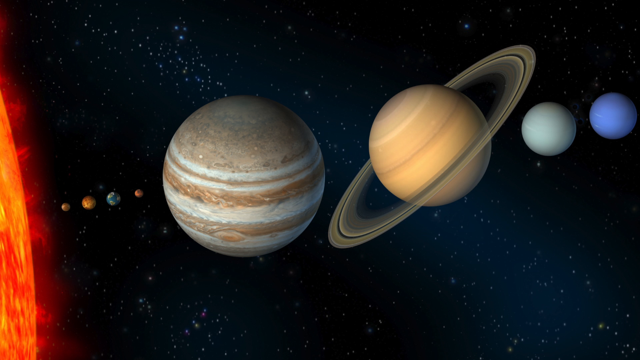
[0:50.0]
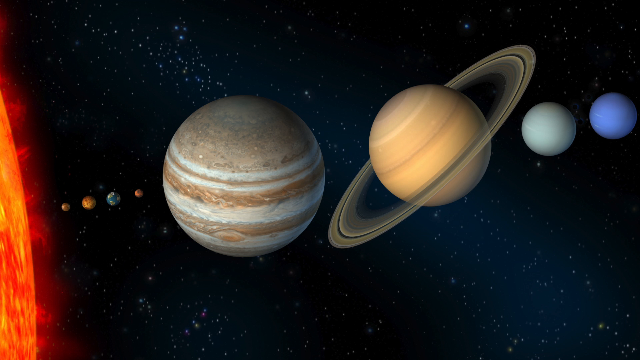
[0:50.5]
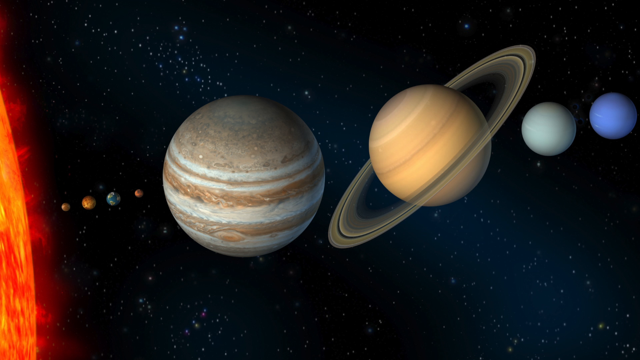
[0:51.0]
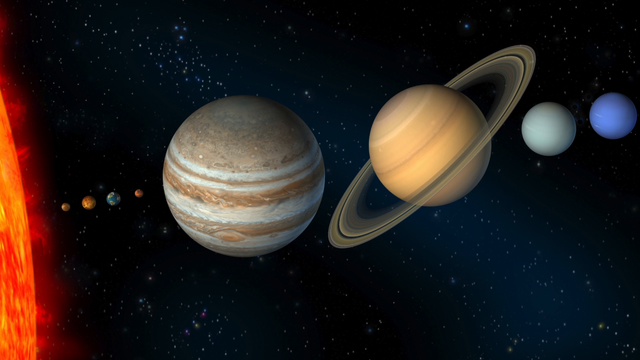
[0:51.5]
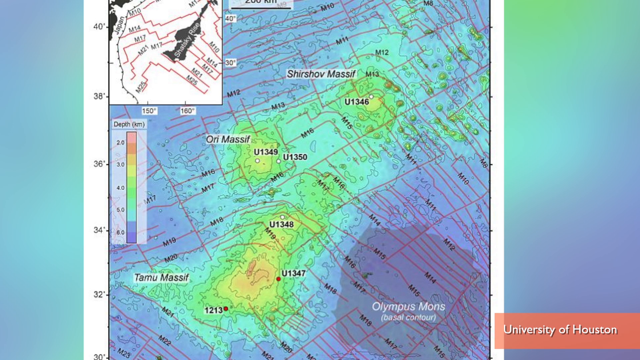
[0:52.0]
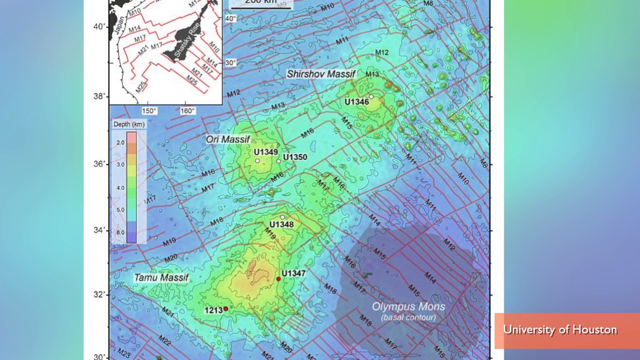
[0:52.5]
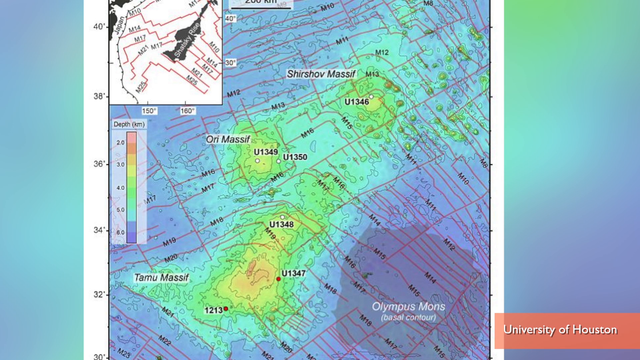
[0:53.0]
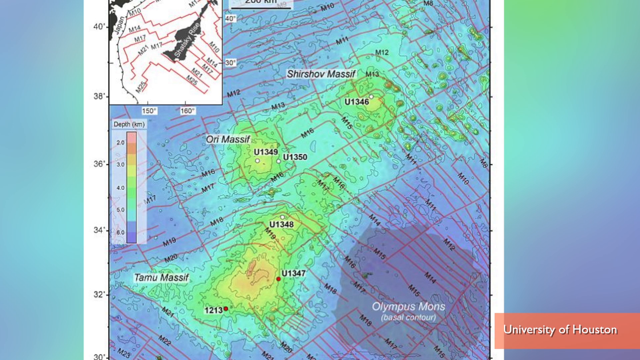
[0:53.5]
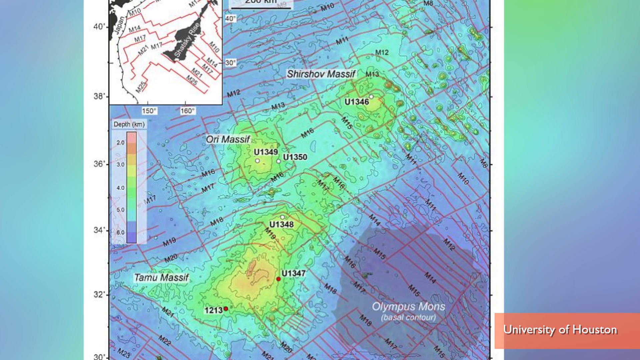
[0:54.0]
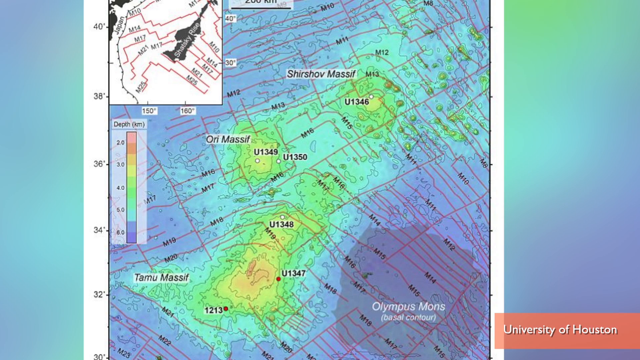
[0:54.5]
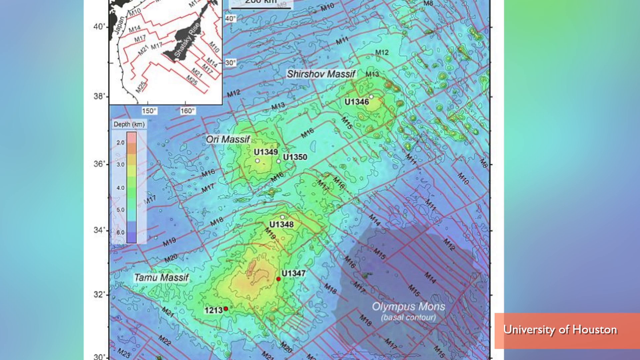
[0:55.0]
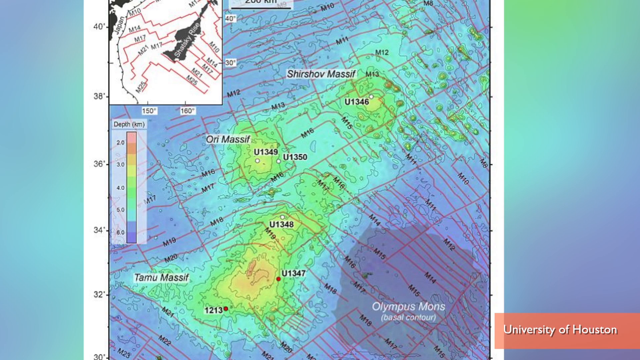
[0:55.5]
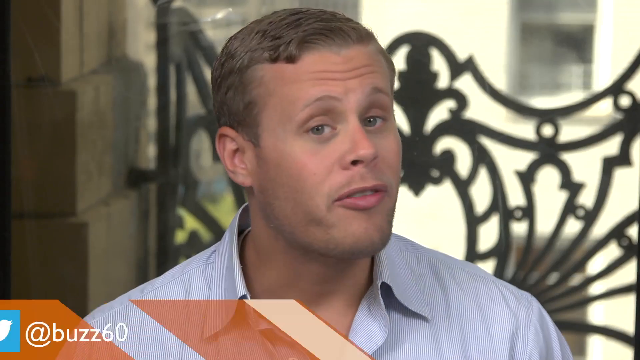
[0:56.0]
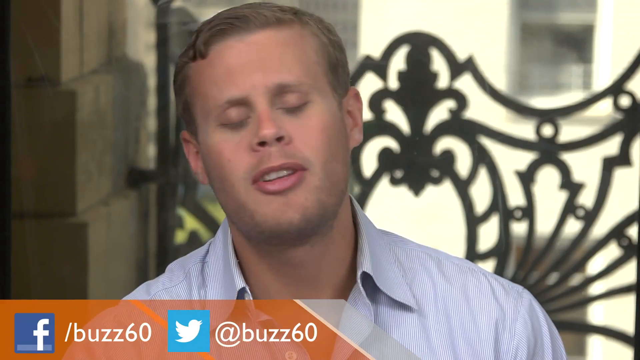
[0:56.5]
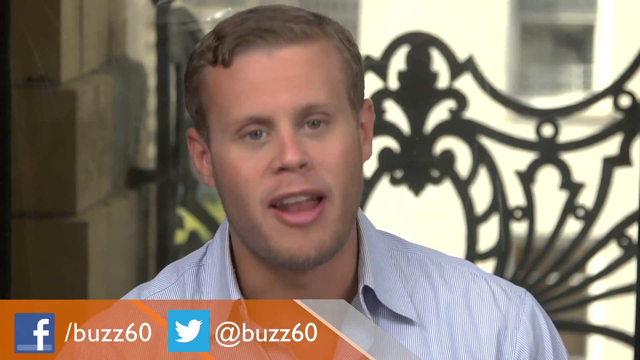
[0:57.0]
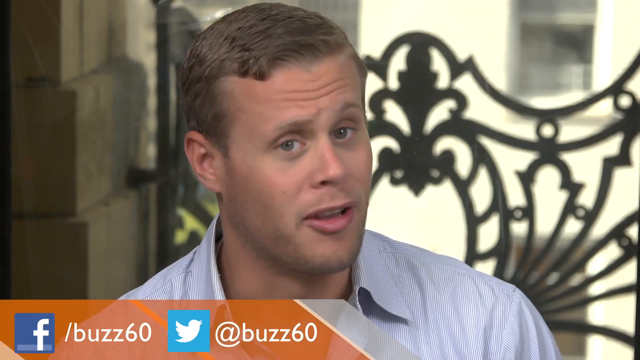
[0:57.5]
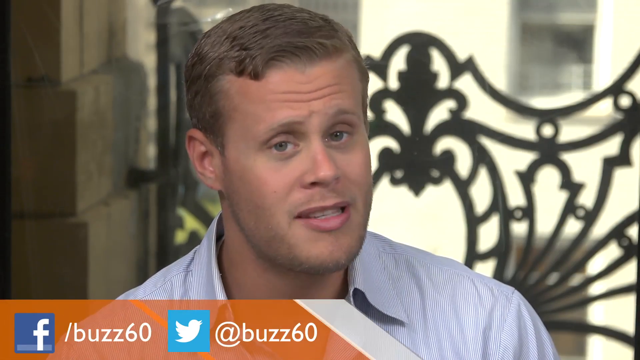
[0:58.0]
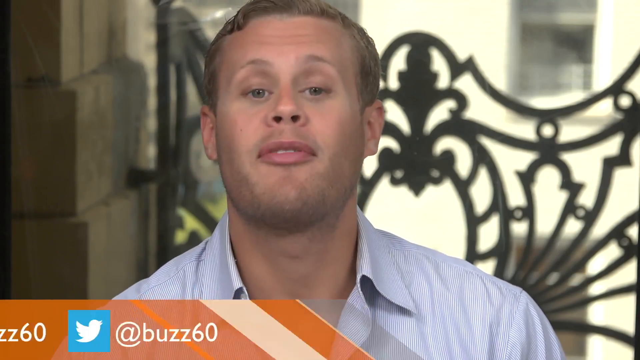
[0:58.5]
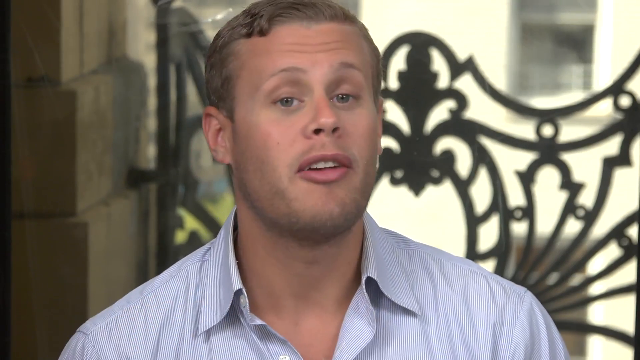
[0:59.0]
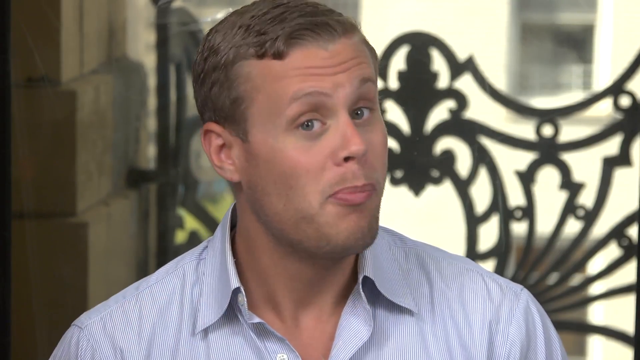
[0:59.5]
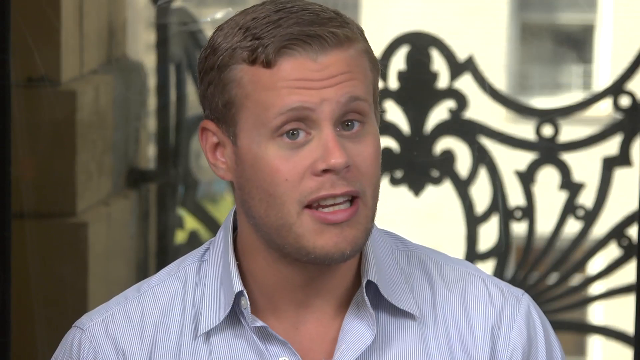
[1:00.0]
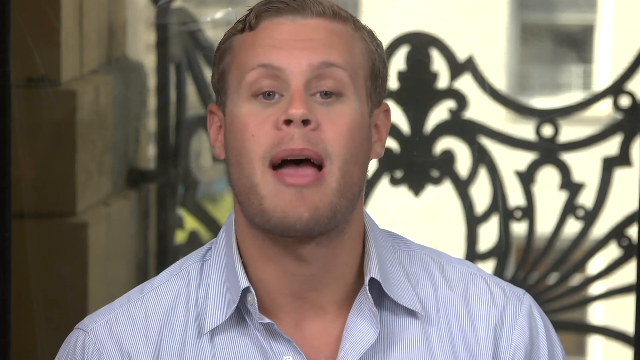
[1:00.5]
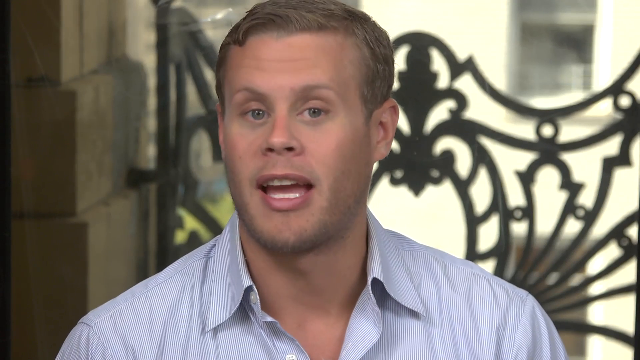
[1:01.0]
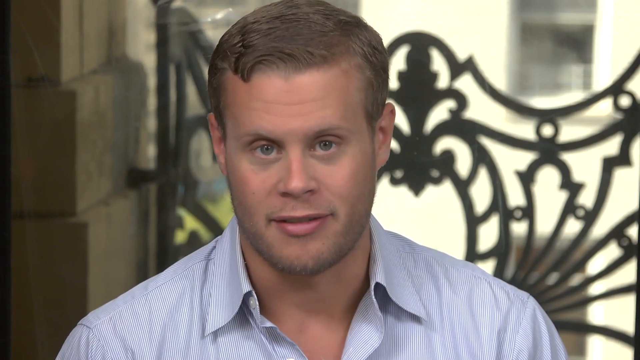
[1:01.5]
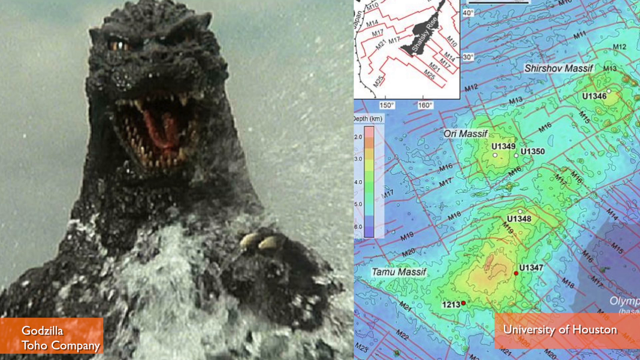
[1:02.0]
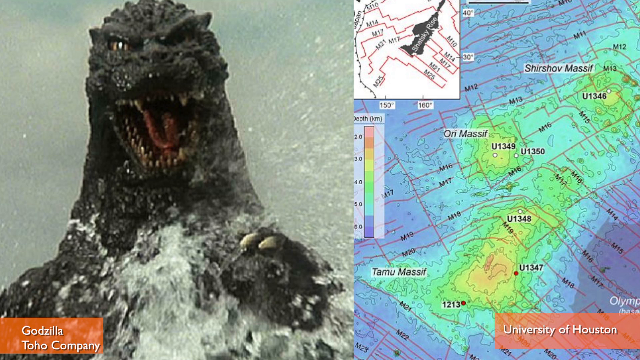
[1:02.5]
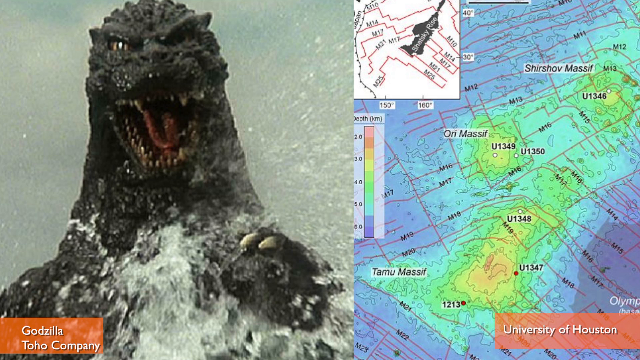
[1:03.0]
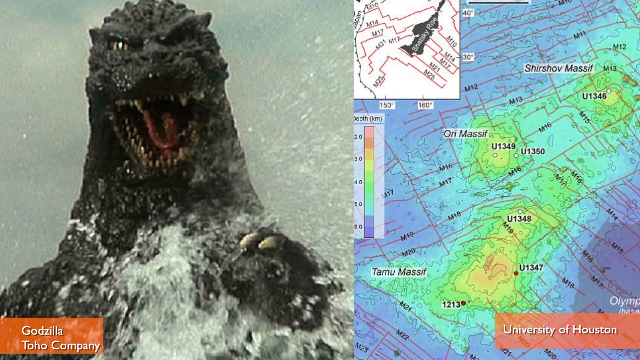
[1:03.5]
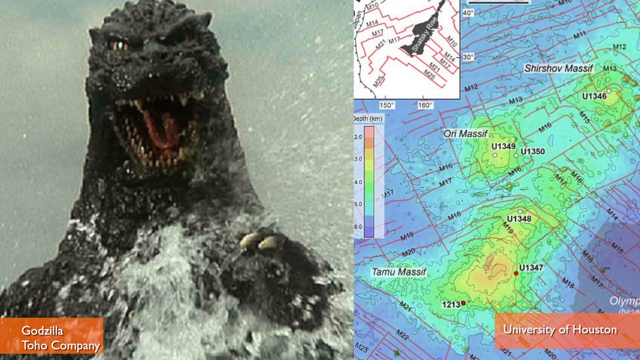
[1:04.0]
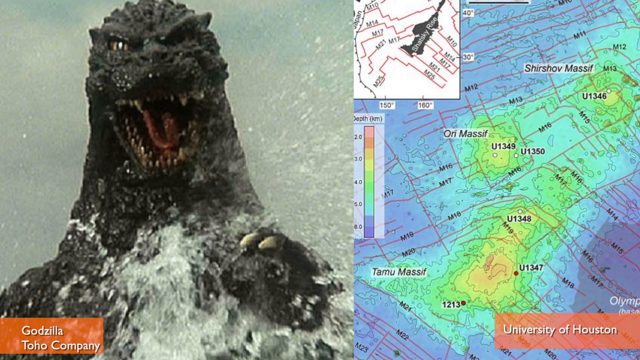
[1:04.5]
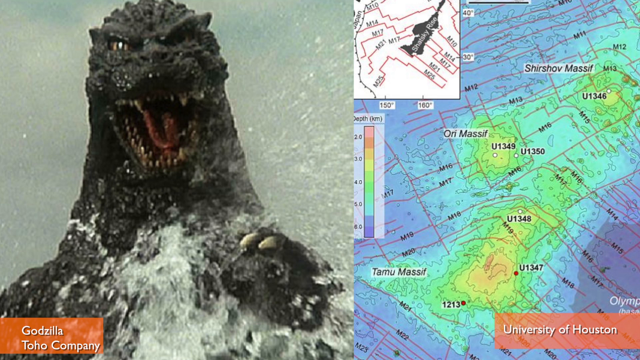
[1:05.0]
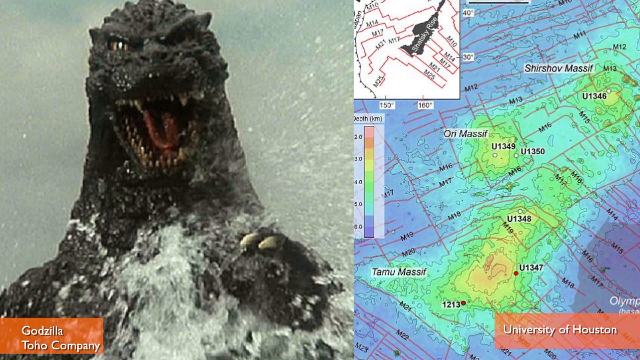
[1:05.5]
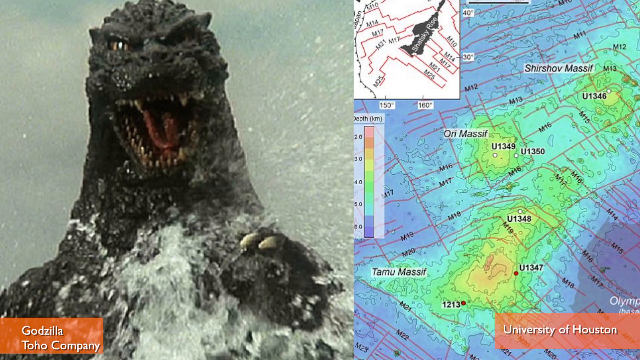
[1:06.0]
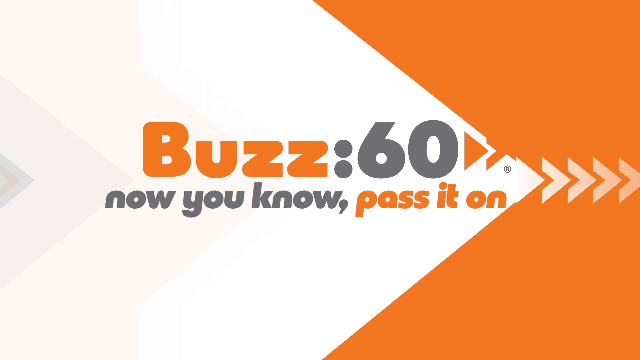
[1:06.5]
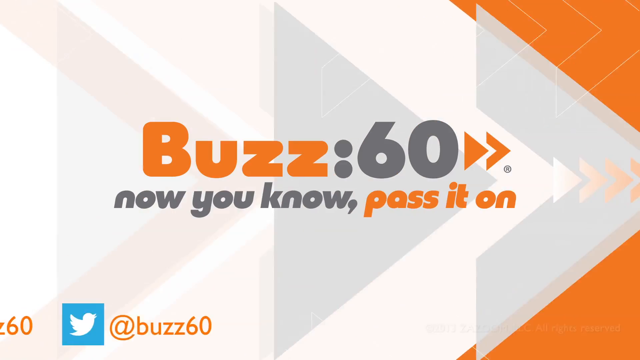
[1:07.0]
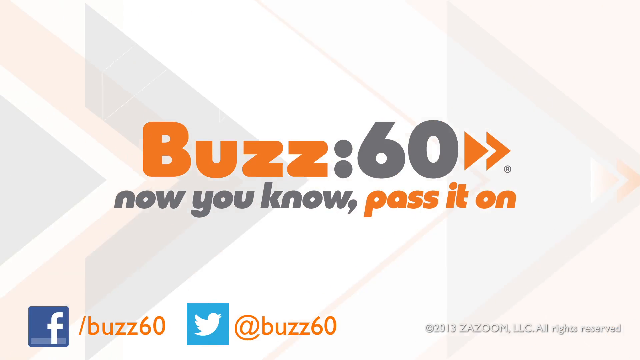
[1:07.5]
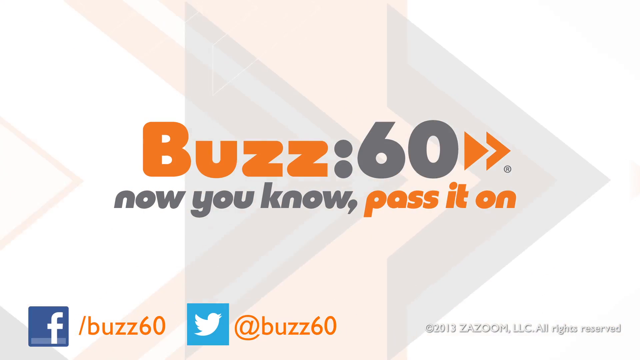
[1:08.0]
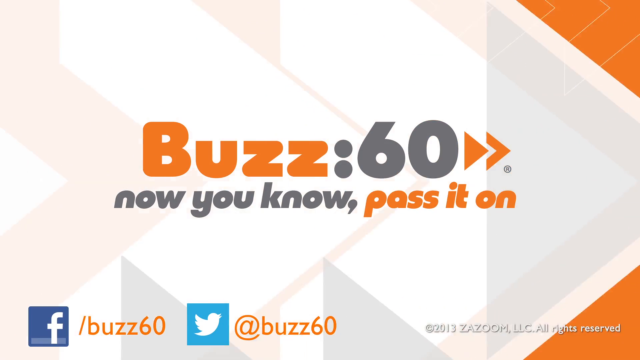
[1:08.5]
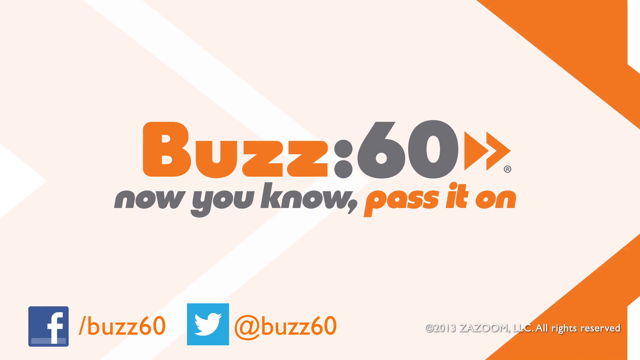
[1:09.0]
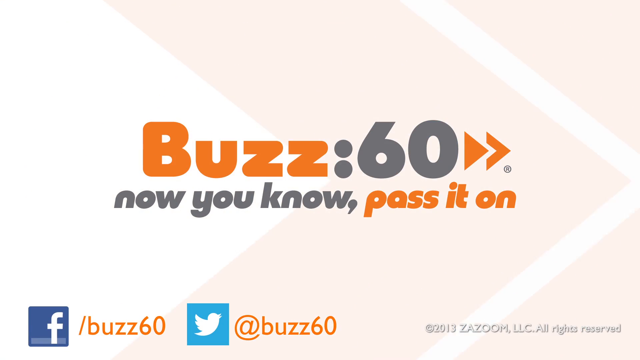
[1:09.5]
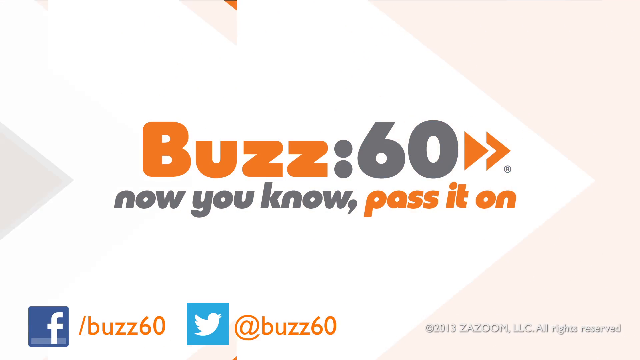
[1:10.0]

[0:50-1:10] The view returns from the solar system graphic to the 2D map, now panned out so that it looks like a piece of paper with the map on it, with a blurry blue and green background on the right and left sides. The map has different markings: a small white margin on the left counts from 32 to 34 up to 40 with small black notches, and almost like a small black and white plat map is inlaid in the upper left. The view then switches back to the man in front of the gate. Orange text briefly pops up at the bottom left with Facebook and Twitter information, and he continues talking. Next comes a split screen with Godzilla on the left and the 2D map on the right. Godzilla, who looks like he is coming out of the water, is black with his mouth open and looks scary; the label at the bottom reads "Godzilla Toho Company". The bottom of the map on the right reads "University of Houston"; these orange text boxes apparently identify the two images. The video then returns to the original Buzz 60 graphic, with a tagline underneath reading "now you know" in gray and "pass it on" in orange, all in lowercase letters.